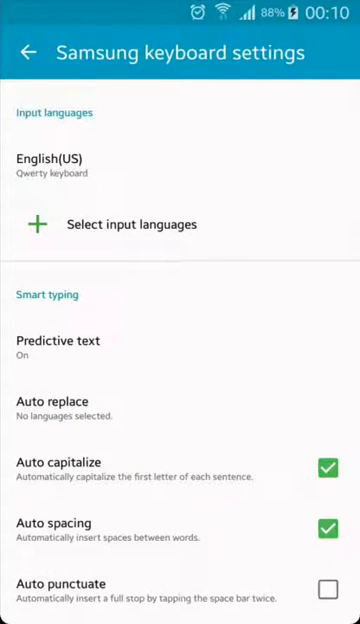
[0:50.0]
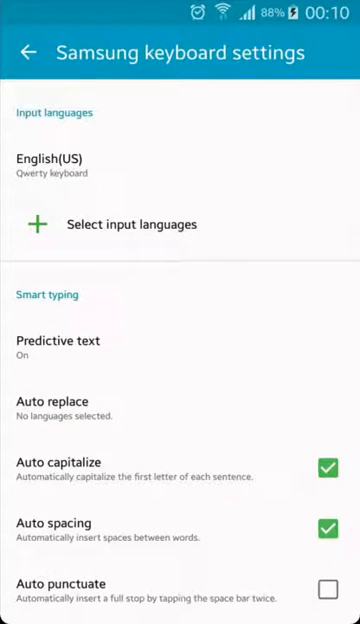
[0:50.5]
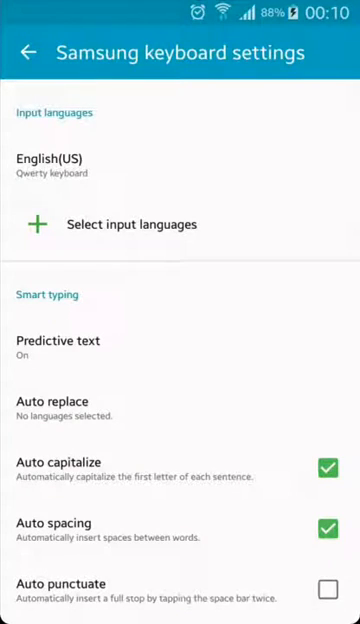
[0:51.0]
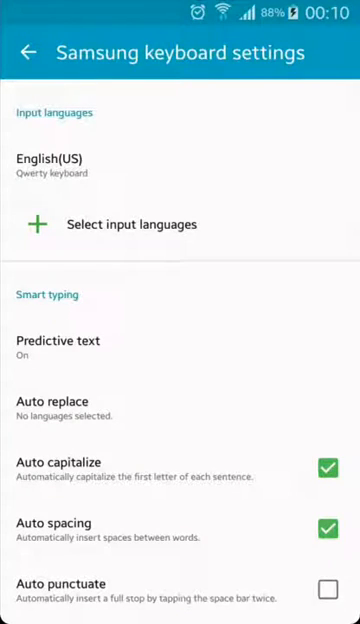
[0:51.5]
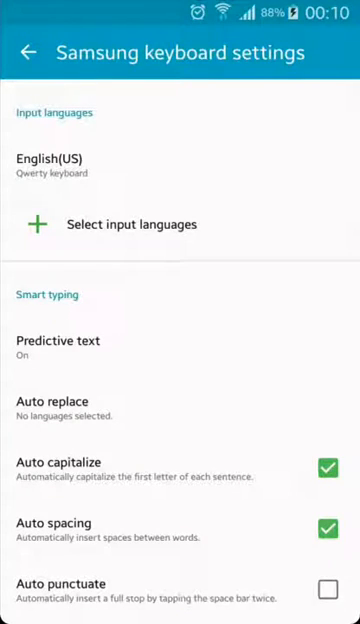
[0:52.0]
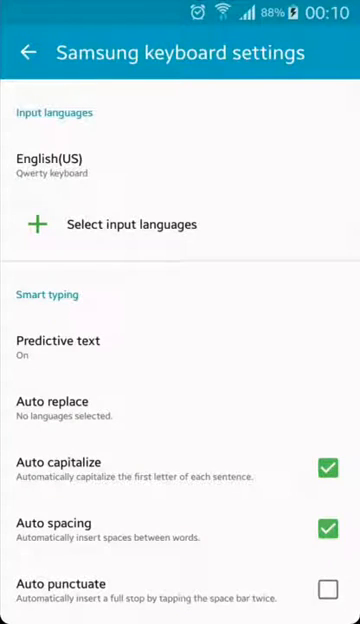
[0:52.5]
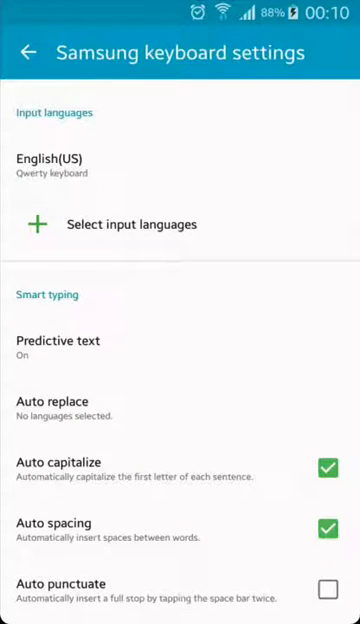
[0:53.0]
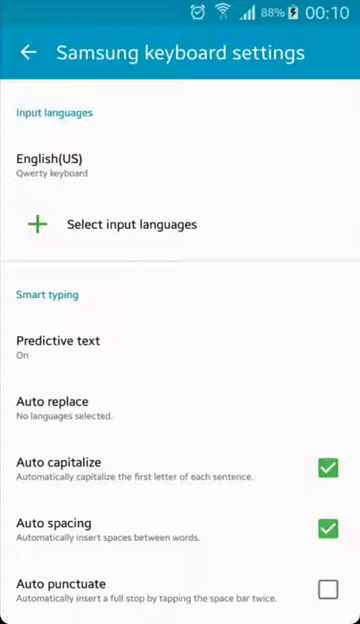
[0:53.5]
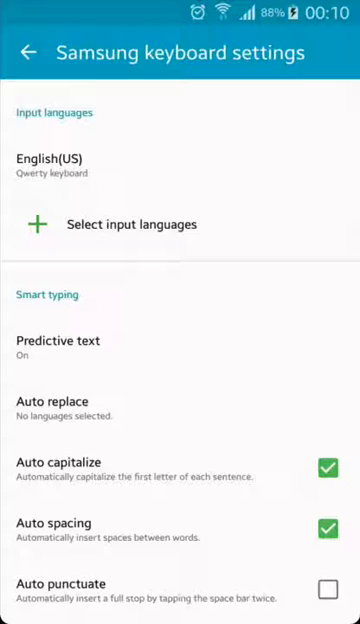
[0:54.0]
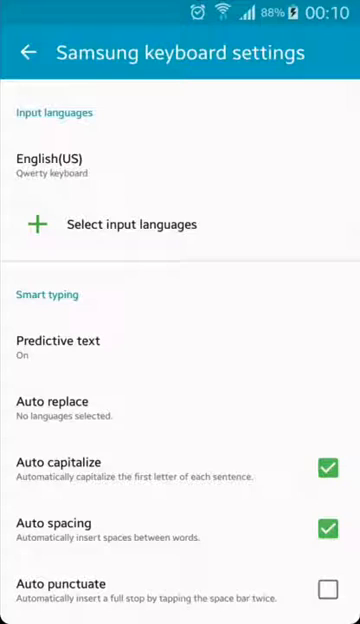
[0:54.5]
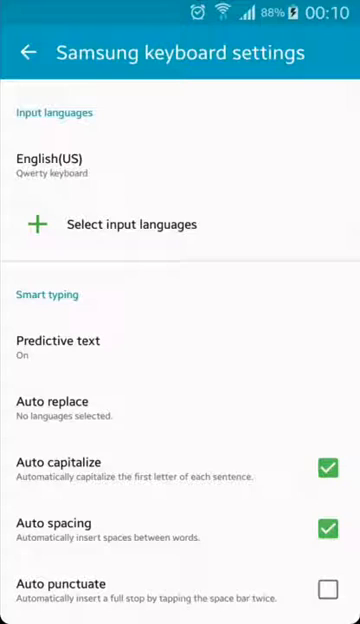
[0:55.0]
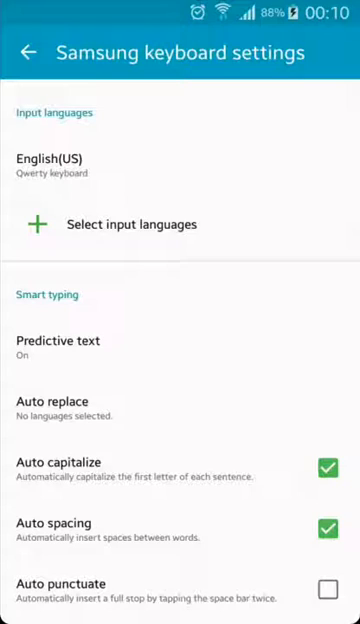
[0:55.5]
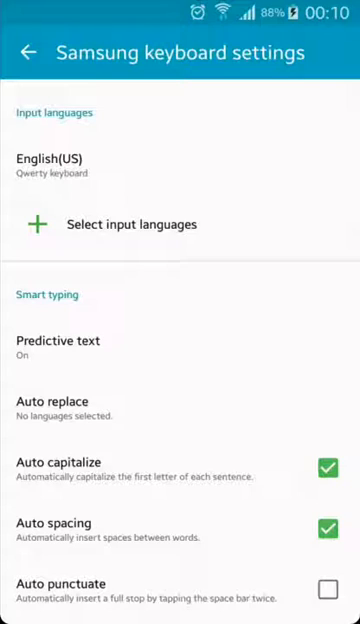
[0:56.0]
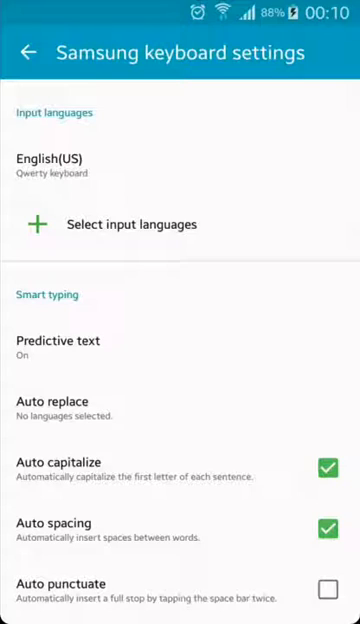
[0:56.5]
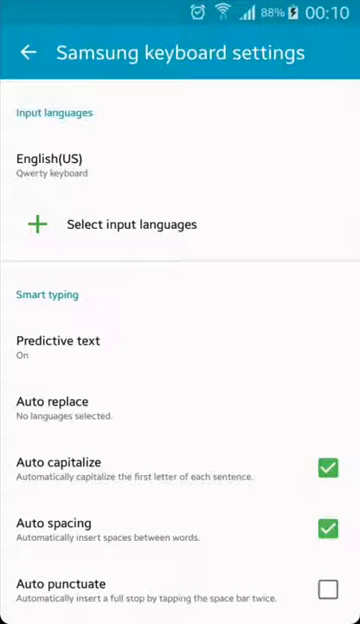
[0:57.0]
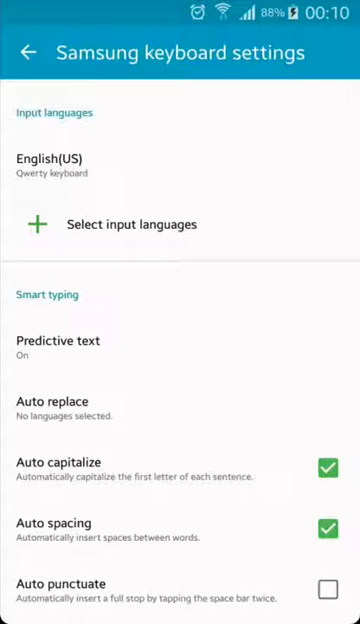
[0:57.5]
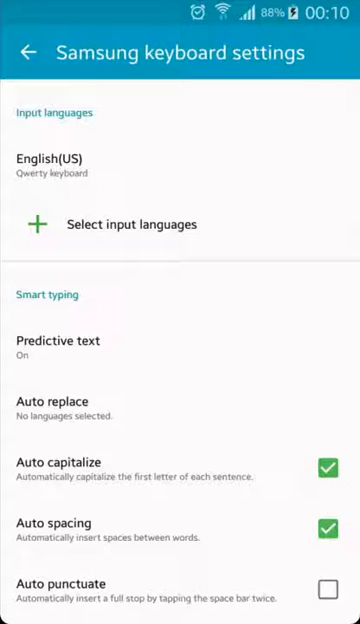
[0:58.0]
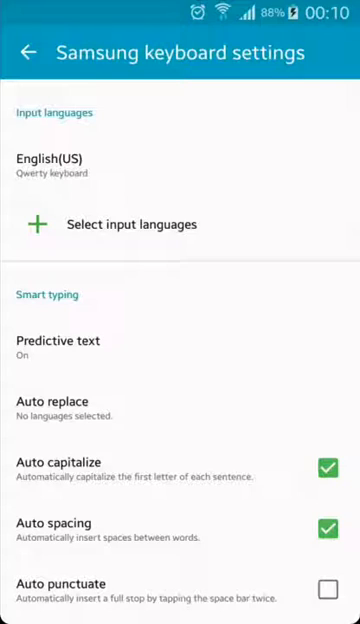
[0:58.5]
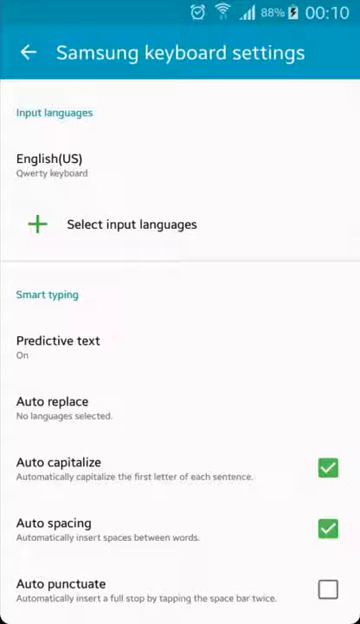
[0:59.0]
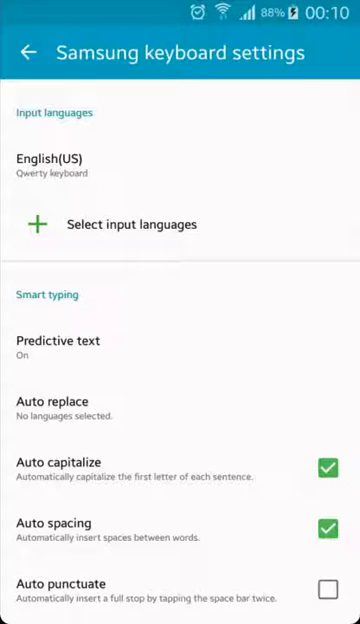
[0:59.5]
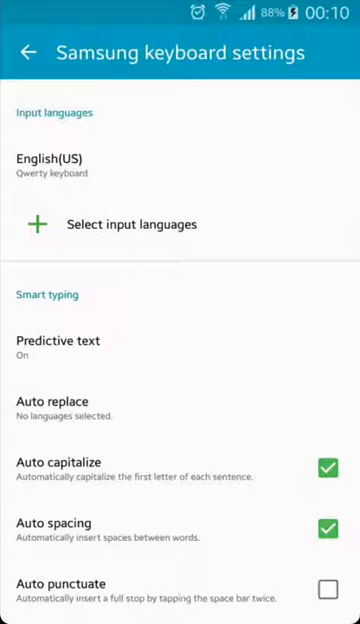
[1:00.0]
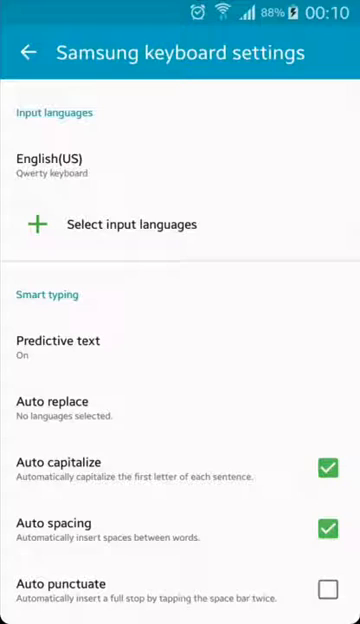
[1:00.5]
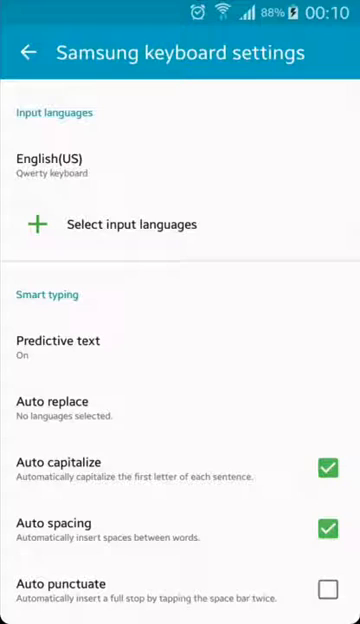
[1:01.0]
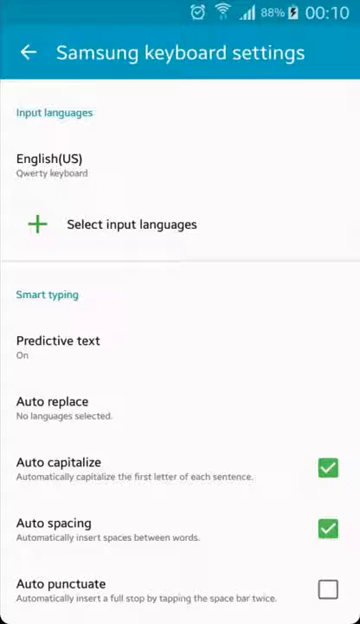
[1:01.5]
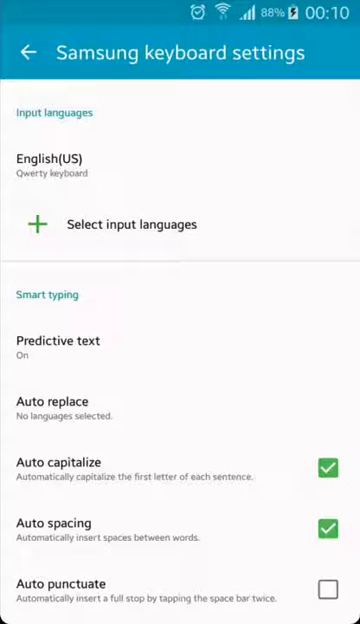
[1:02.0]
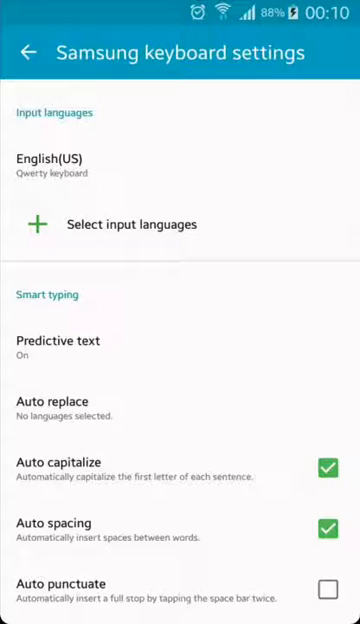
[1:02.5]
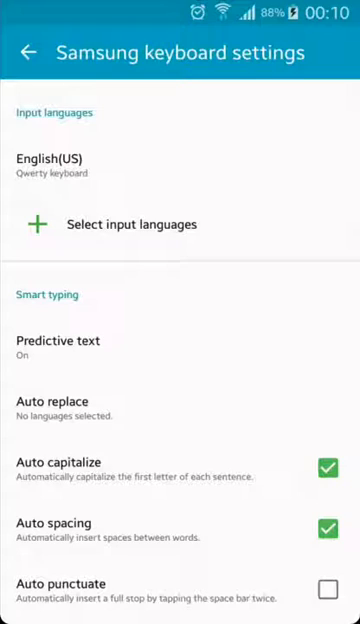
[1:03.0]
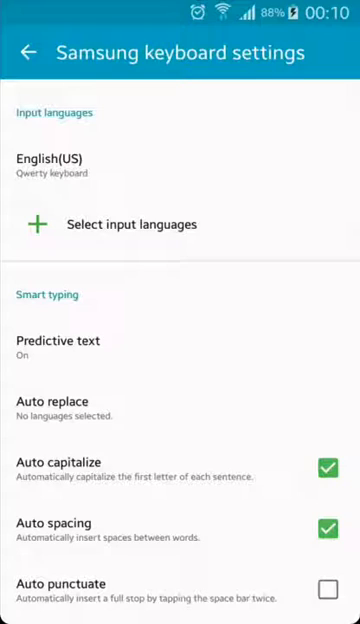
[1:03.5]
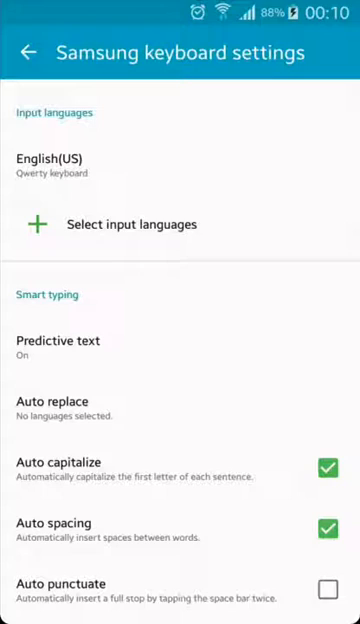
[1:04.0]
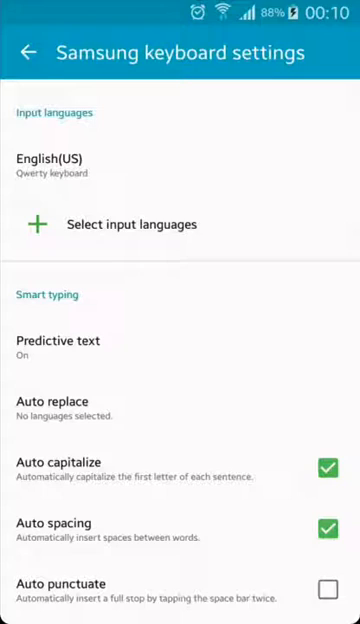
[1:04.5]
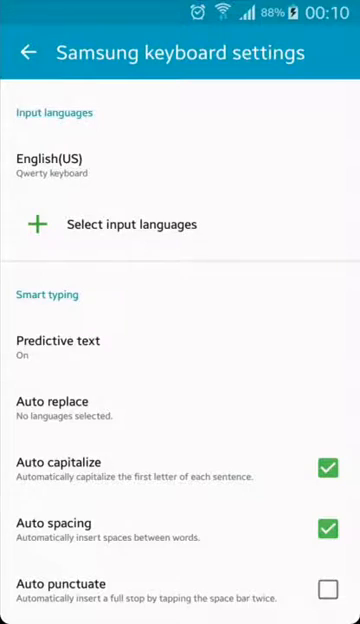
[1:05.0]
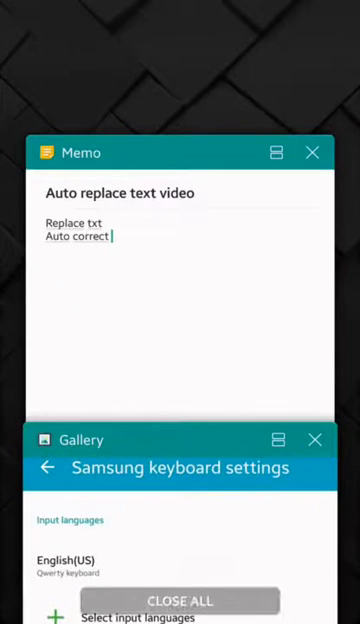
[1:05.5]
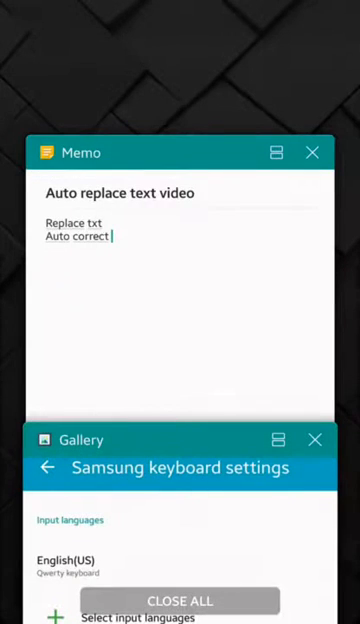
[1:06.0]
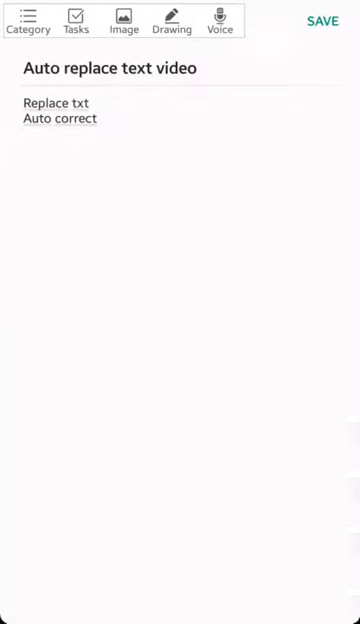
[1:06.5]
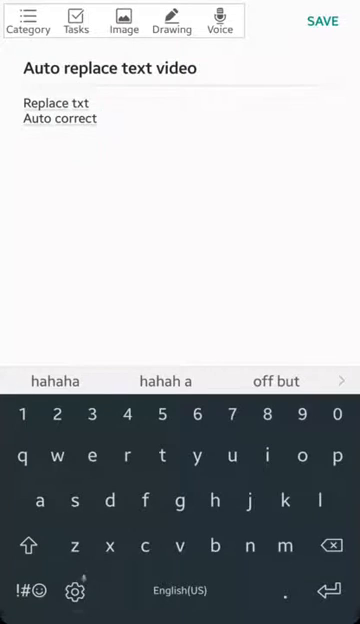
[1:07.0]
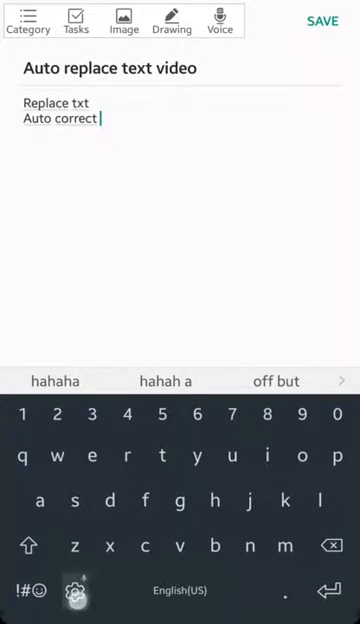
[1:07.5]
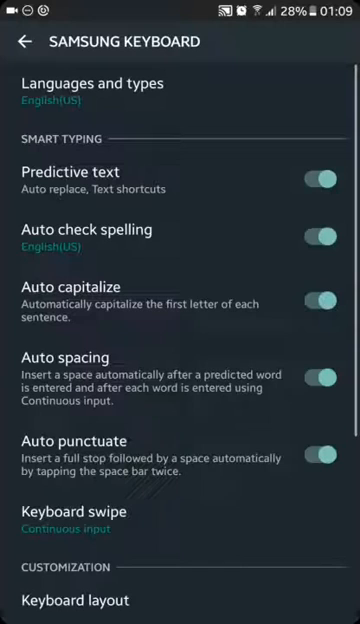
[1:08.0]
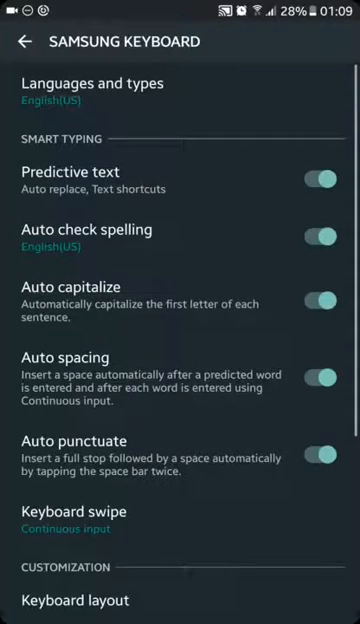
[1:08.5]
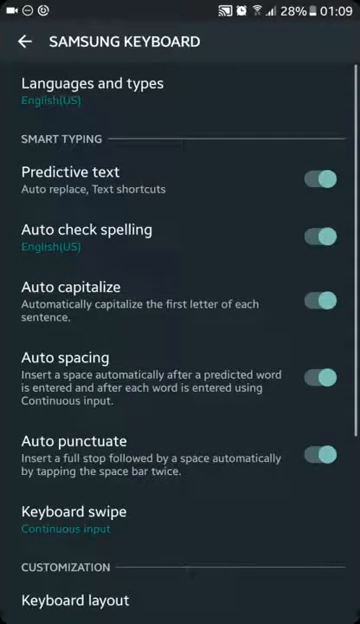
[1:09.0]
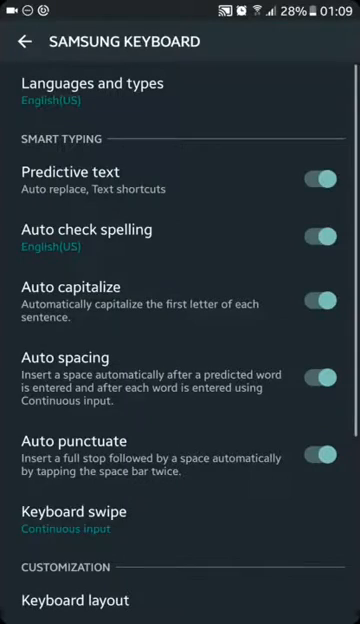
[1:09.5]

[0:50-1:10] A phone app screen shows "Samsung keyboard settings" at the top on a blue banner. Below it is "input languages," with English currently selected, and below that a green cross beside "select input languages." After a thin horizontal line comes "smart typing" in blue text, followed by several sections: "predictive text," which reads "on"; "auto replace," with the language selected; then "auto capitalize," "auto spacing," and "auto punctuate." The background behind these categories is white. Check boxes sit on the right next to the three bottom categories; auto capitalize and auto spacing are green with check marks, while auto punctuate is not checked. The screen then returns to the auto-replace text video screen, with four words typed in.